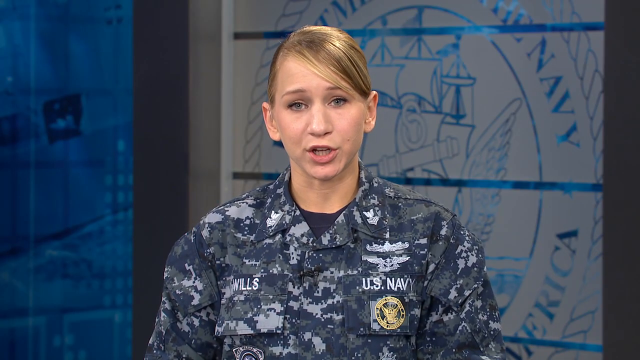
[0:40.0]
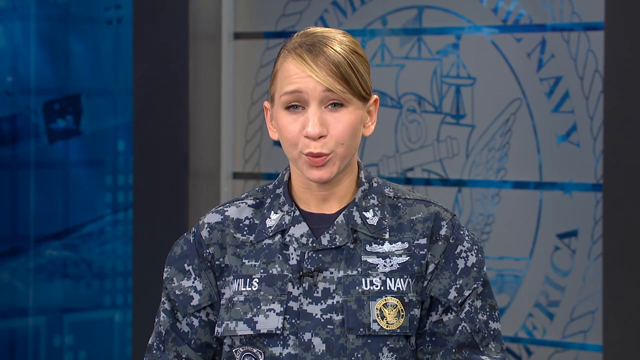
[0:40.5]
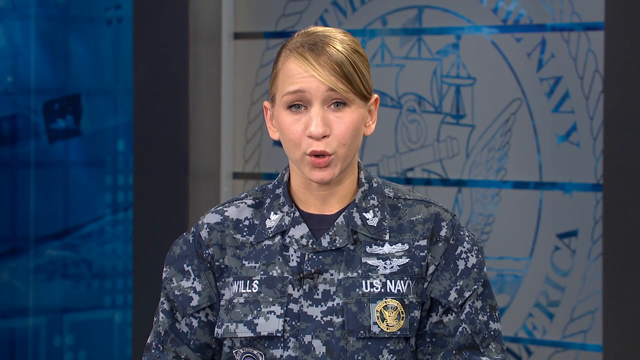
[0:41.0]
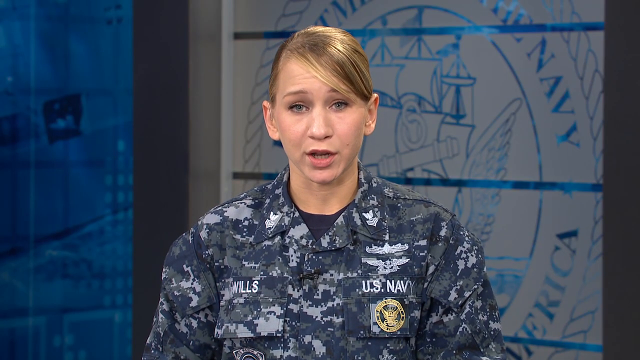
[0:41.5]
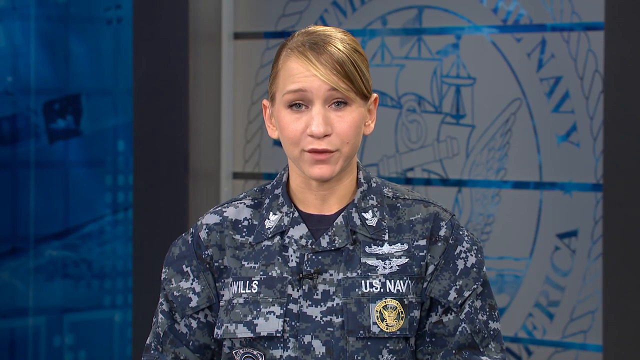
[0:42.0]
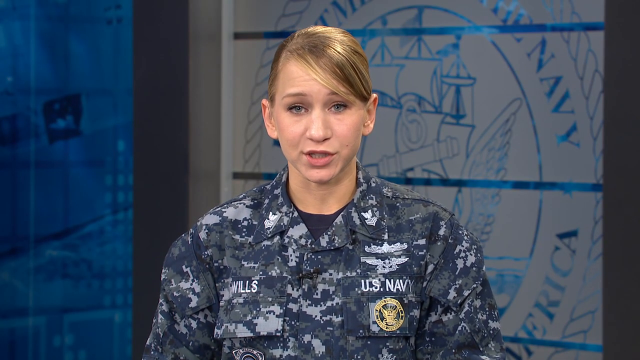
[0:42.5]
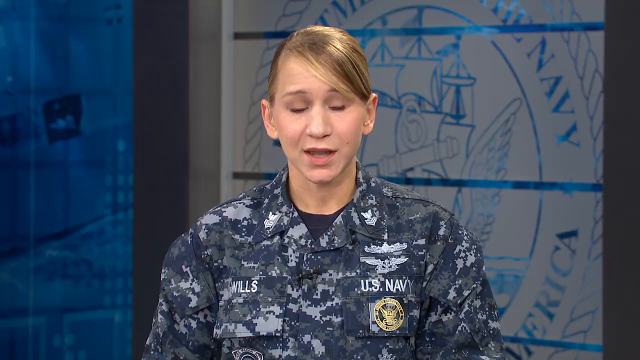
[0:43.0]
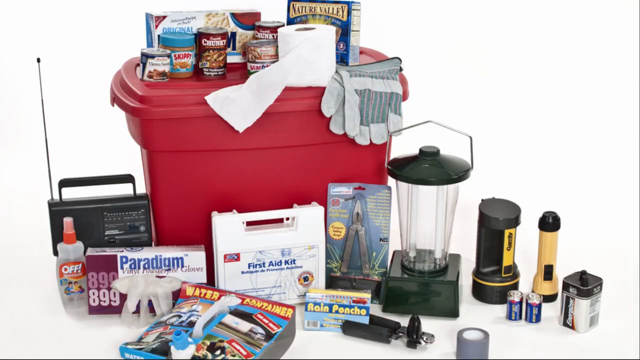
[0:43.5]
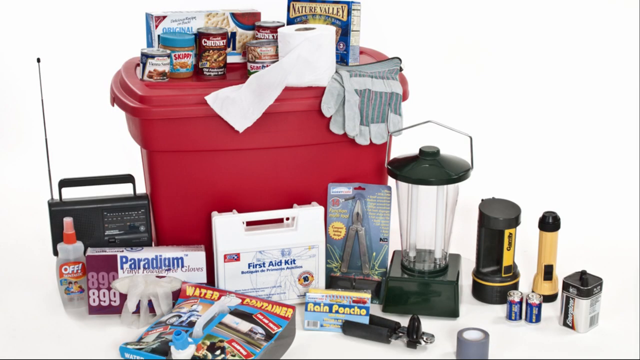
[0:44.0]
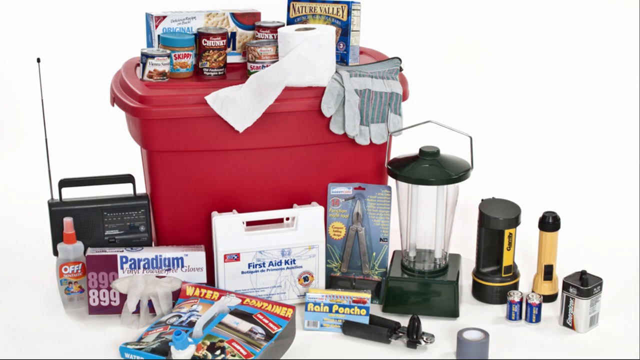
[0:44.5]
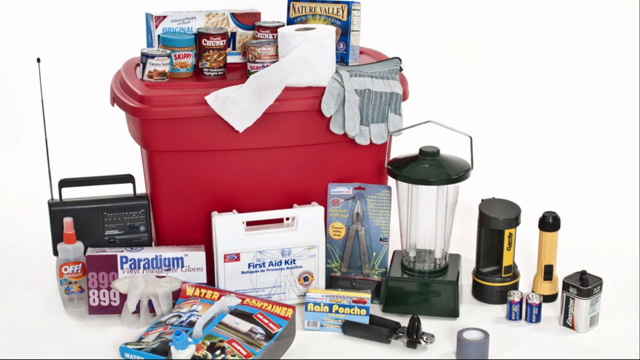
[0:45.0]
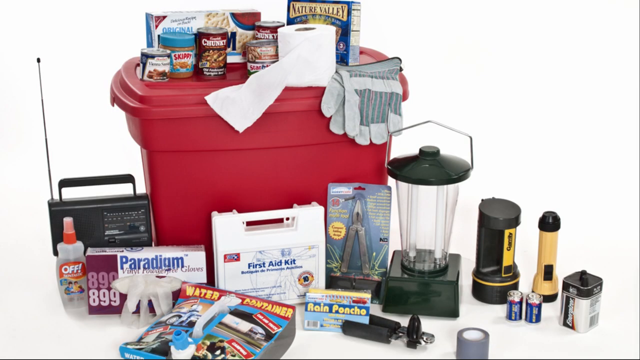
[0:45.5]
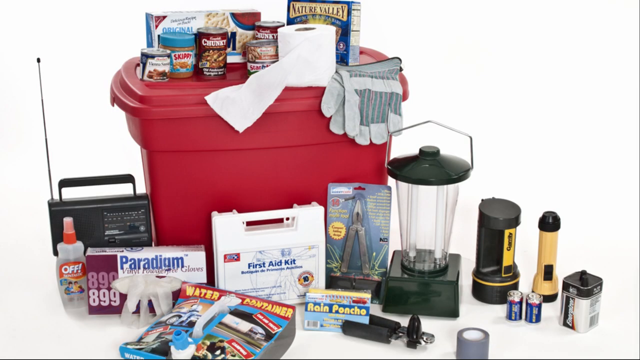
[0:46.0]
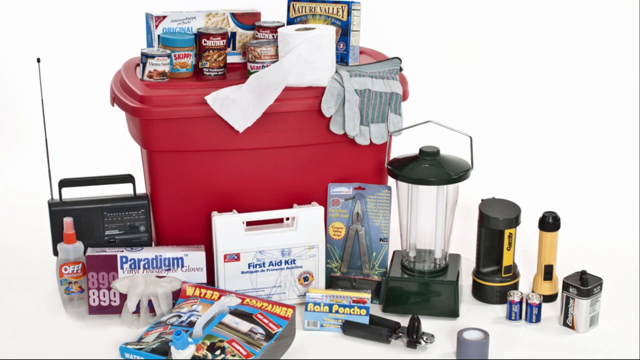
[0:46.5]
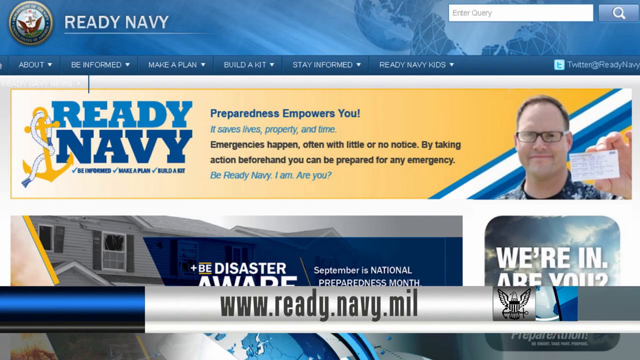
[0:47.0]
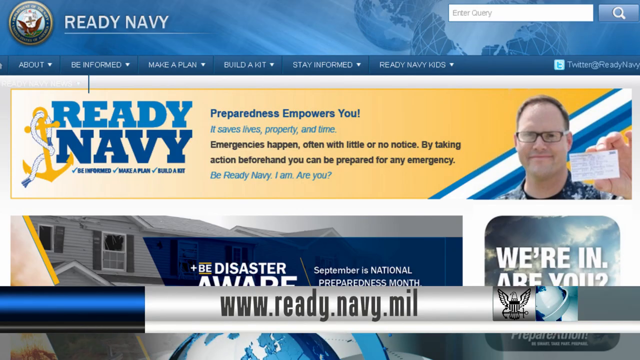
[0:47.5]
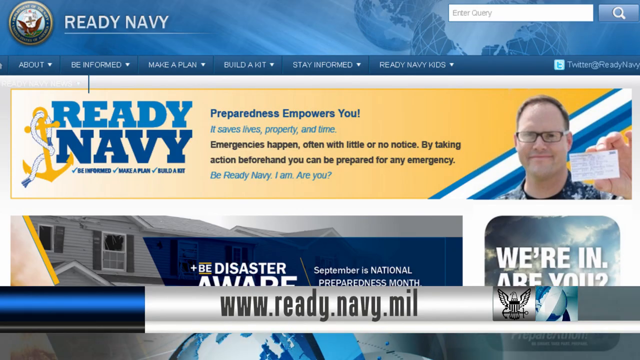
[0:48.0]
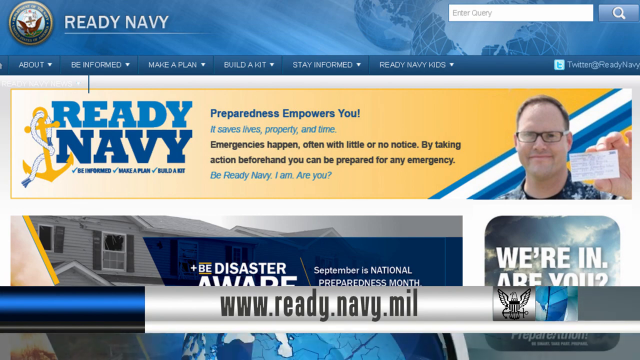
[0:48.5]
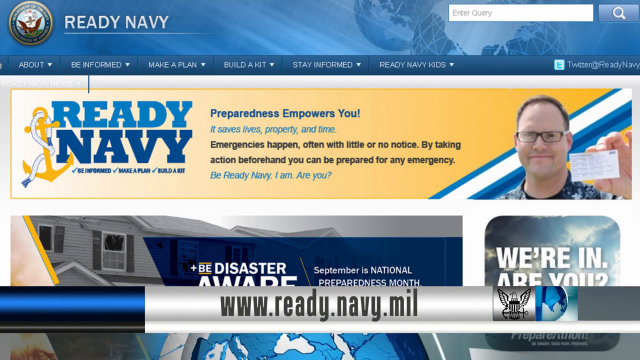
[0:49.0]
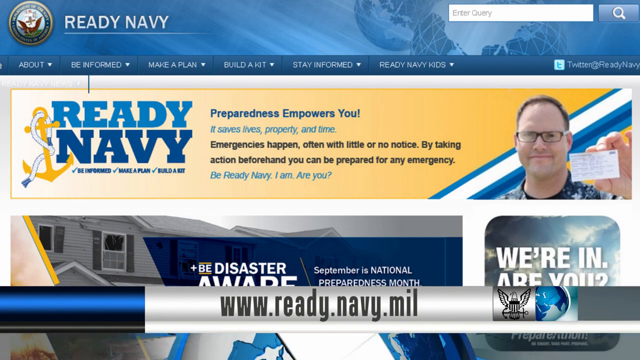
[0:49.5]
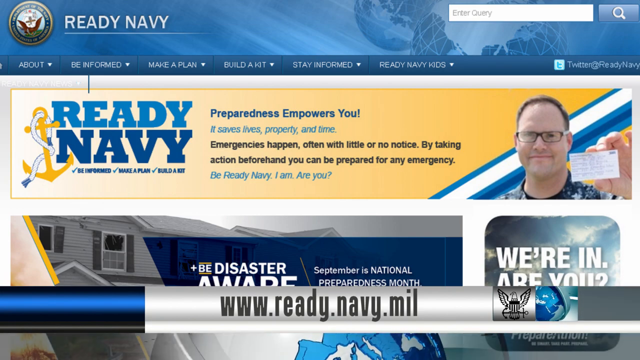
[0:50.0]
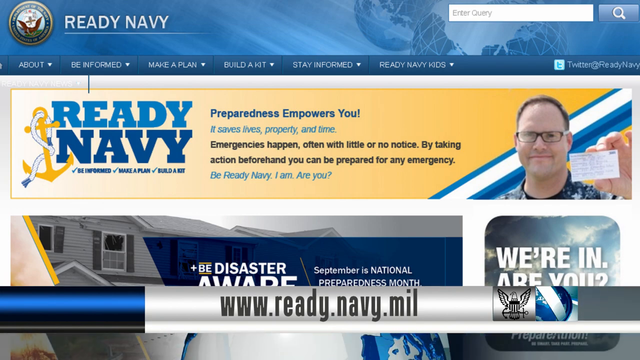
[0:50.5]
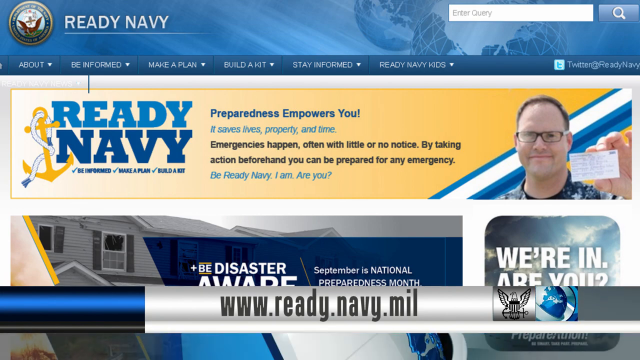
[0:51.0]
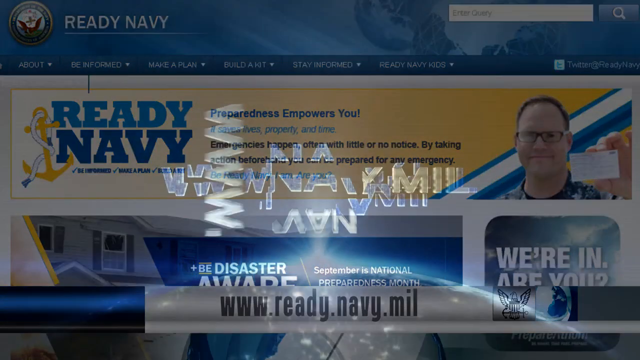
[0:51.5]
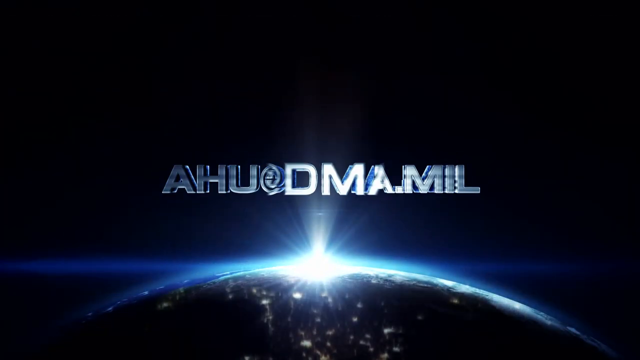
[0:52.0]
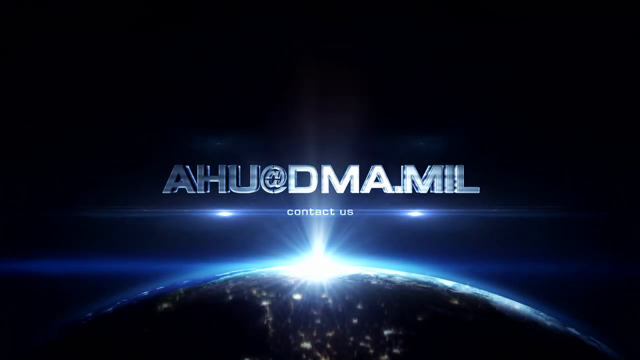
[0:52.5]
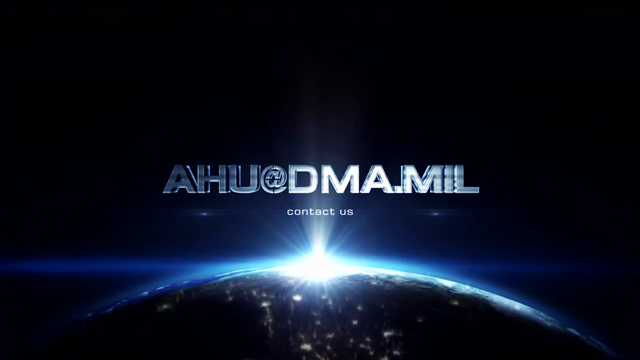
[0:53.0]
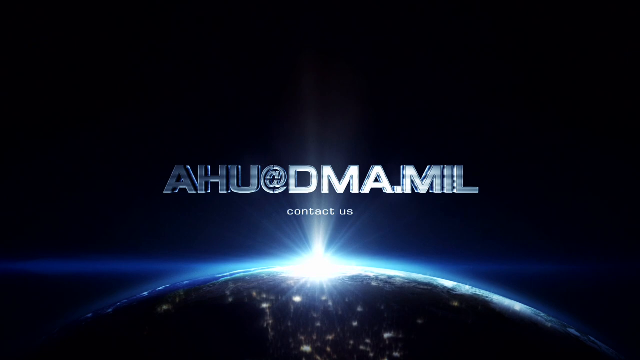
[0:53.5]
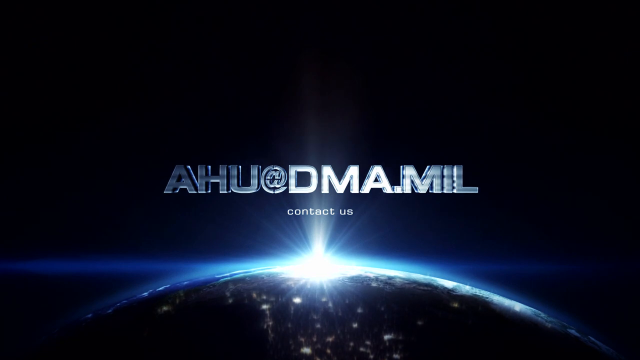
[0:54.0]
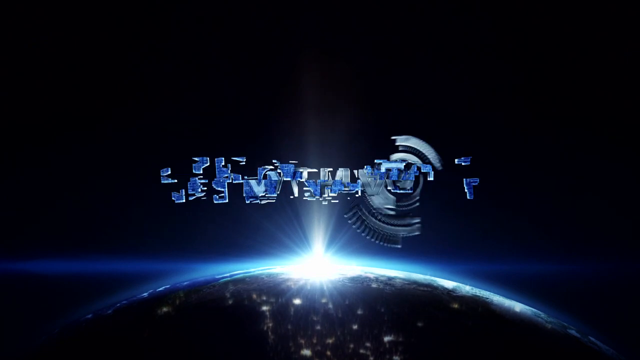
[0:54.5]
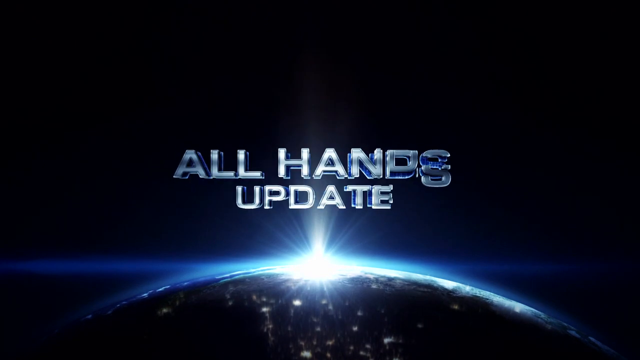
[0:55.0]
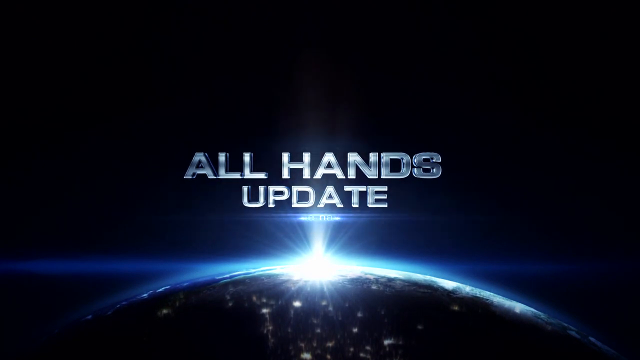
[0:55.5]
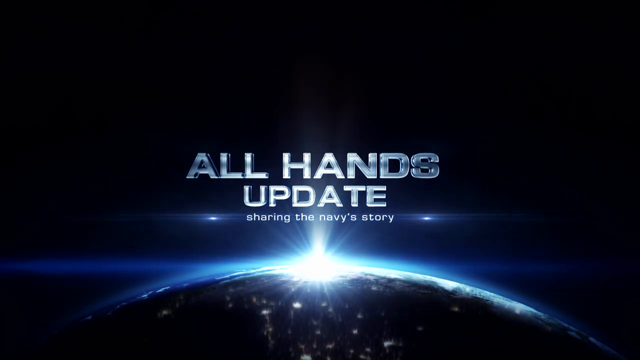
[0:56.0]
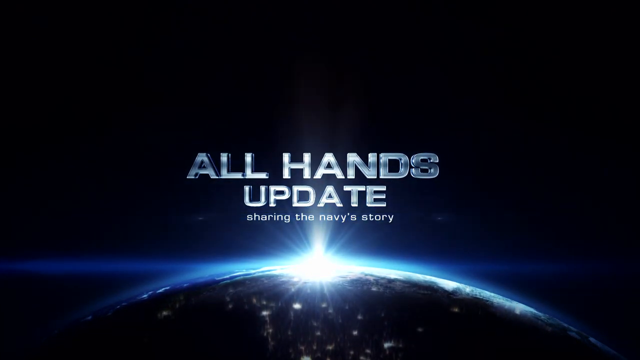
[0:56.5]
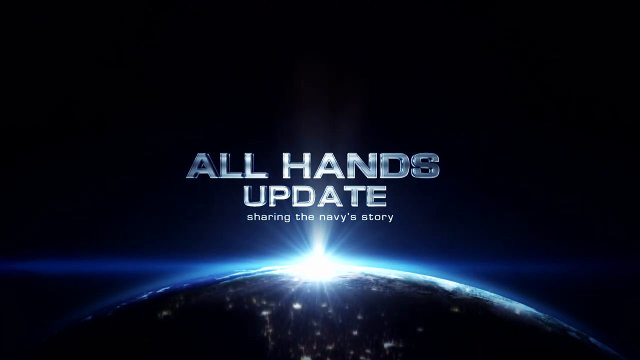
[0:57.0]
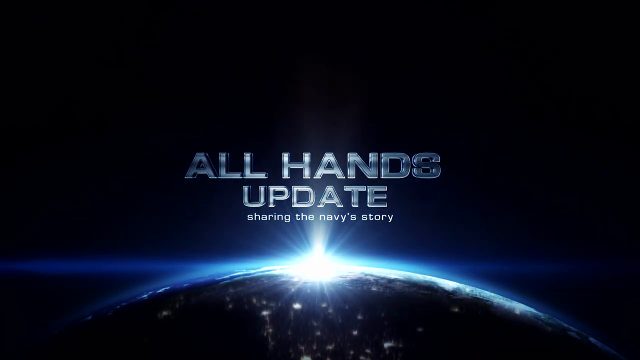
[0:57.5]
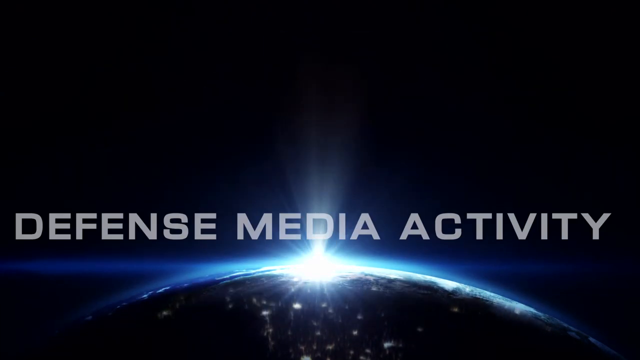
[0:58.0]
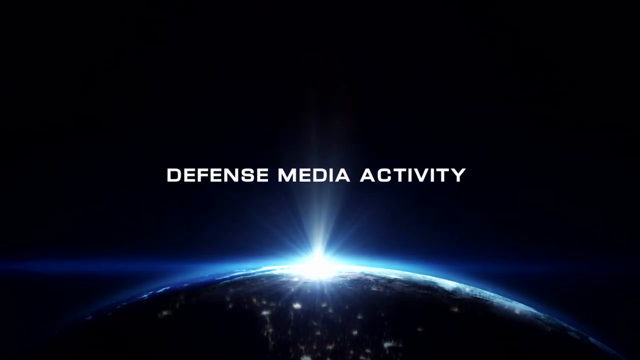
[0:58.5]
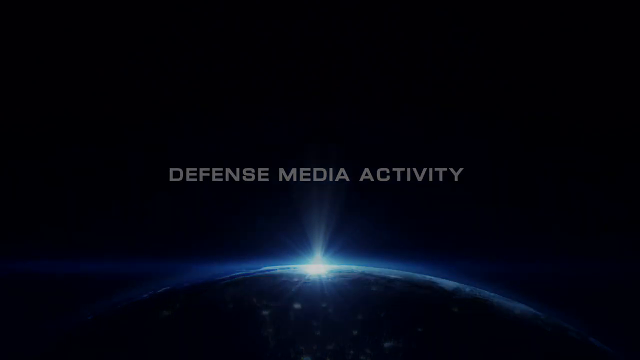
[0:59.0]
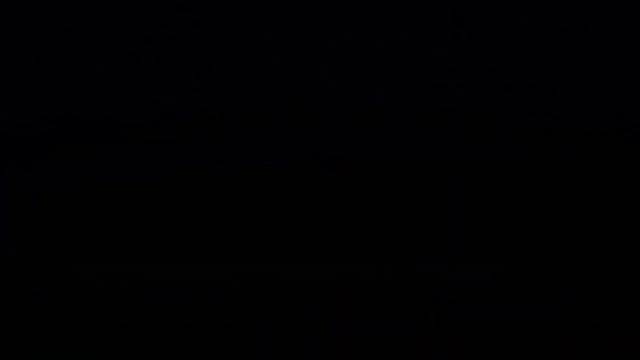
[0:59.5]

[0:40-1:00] A female Navy SEAL, Caucasian with blonde hair, talks directly to the camera while nodding her head up and down, barely smiling. The video then cuts to a white background with a red plastic tote with a lid. On the lid are many different types of foods, such as peanut butter, some canned soup, some Nature Valley crackers and some Nabisco crackers, along with a roll of tissue and some gray fireproof gloves. On the side of the tote is a radio that appears to be an AM FM radio, with a long skinny antenna on top. There is a bottle of Easy Off with two children on the label, a box of latex gloves, a white first aid kit in front of the red tote, and some needle nose pliers.